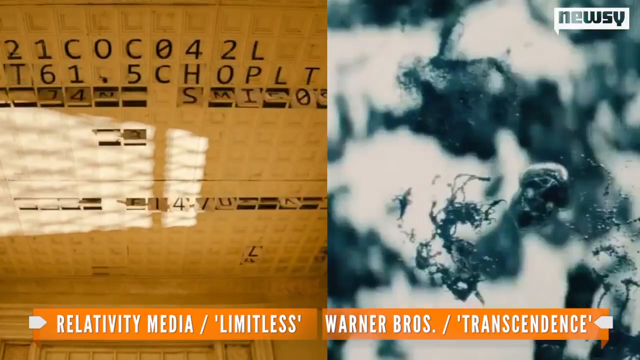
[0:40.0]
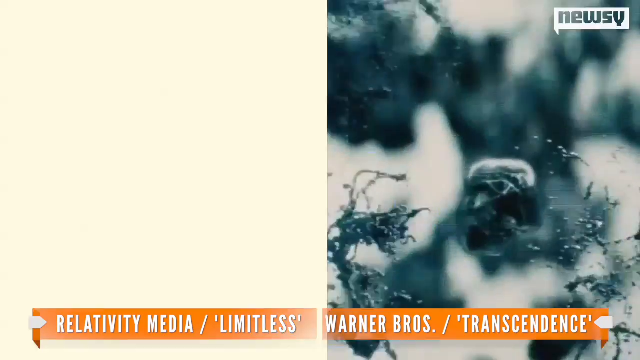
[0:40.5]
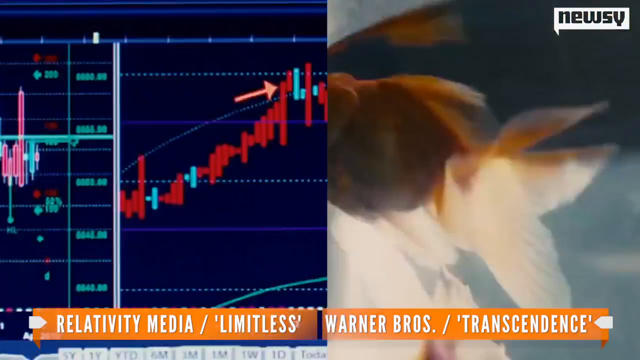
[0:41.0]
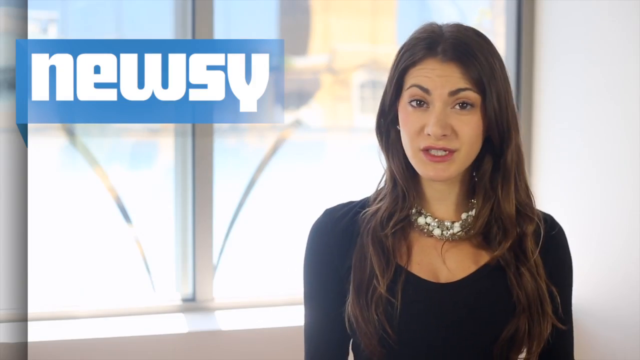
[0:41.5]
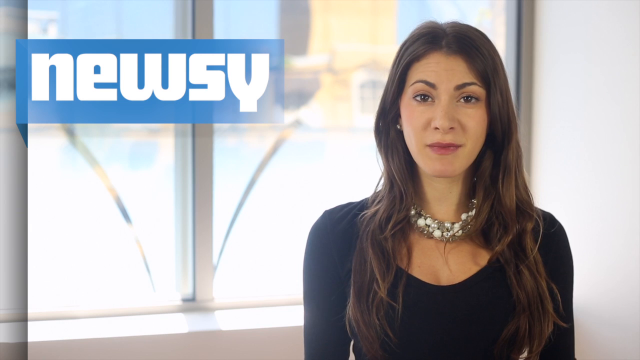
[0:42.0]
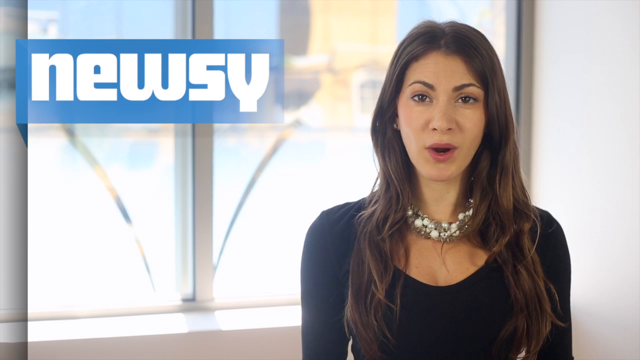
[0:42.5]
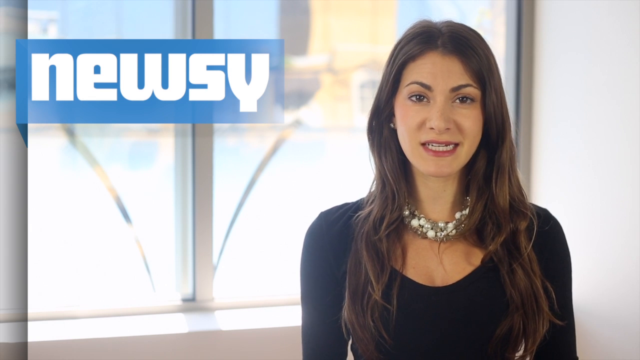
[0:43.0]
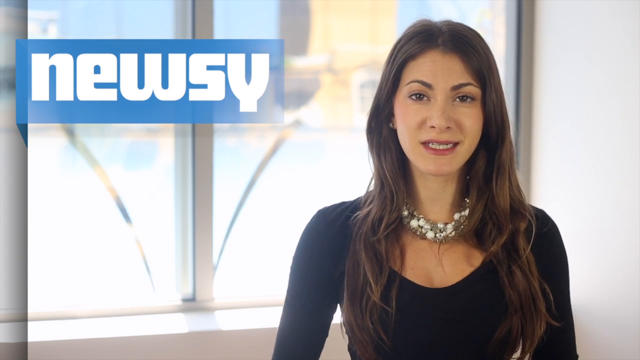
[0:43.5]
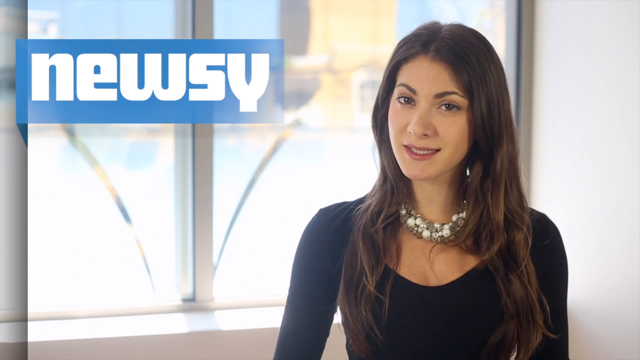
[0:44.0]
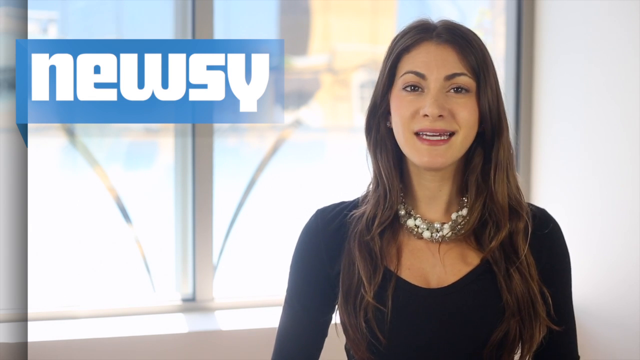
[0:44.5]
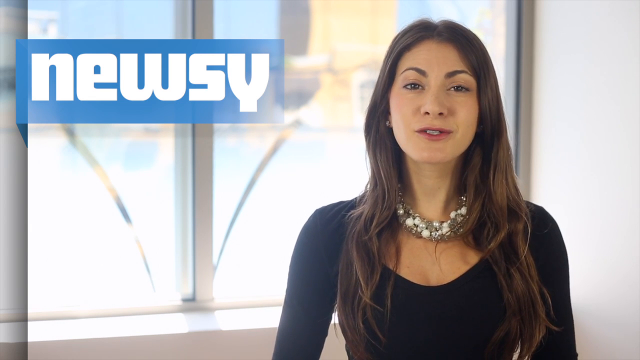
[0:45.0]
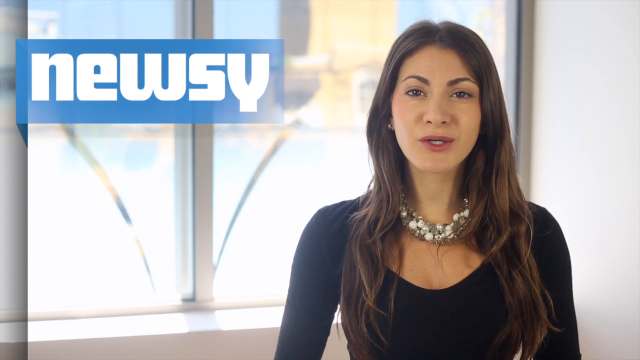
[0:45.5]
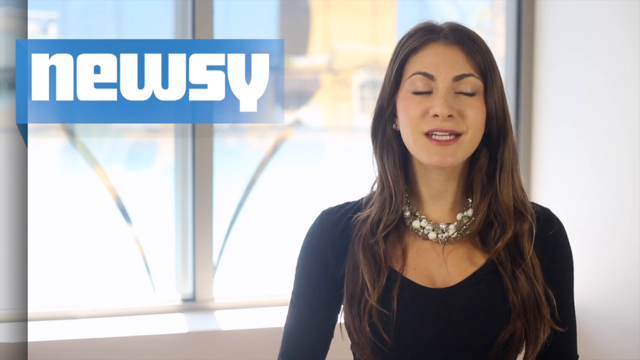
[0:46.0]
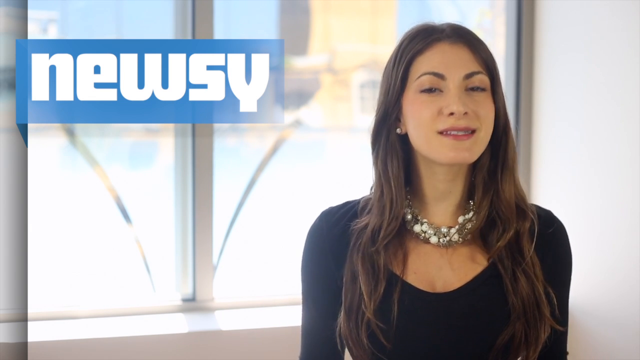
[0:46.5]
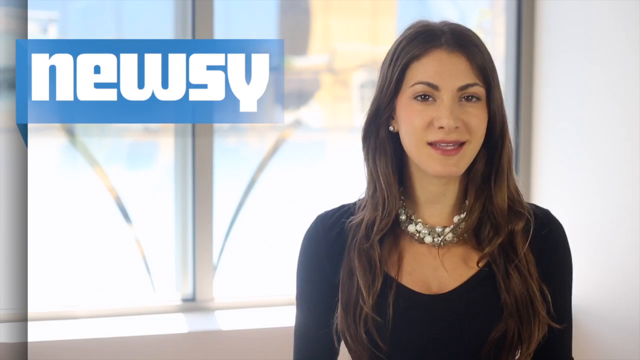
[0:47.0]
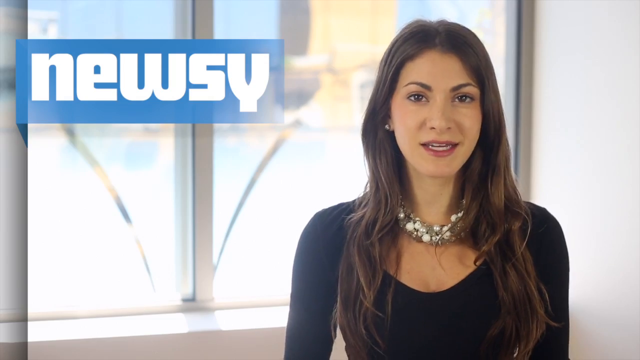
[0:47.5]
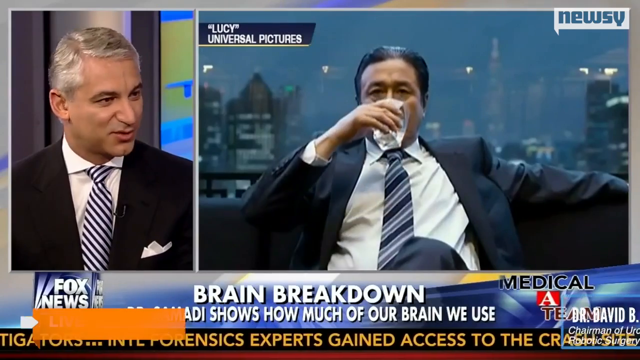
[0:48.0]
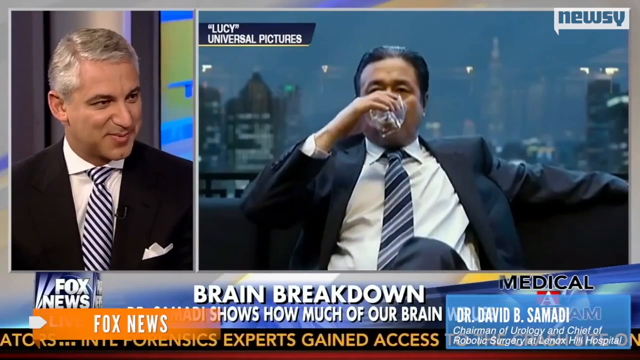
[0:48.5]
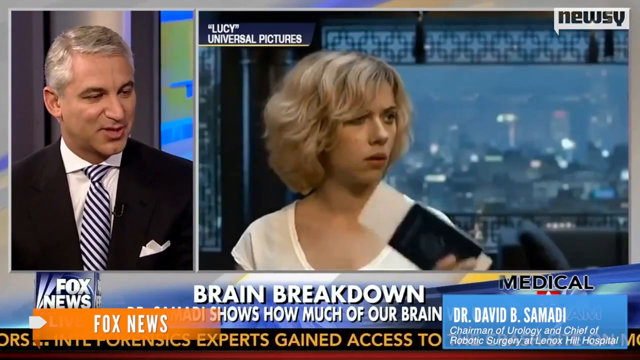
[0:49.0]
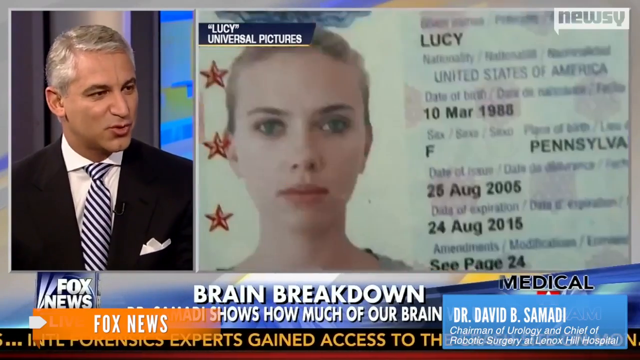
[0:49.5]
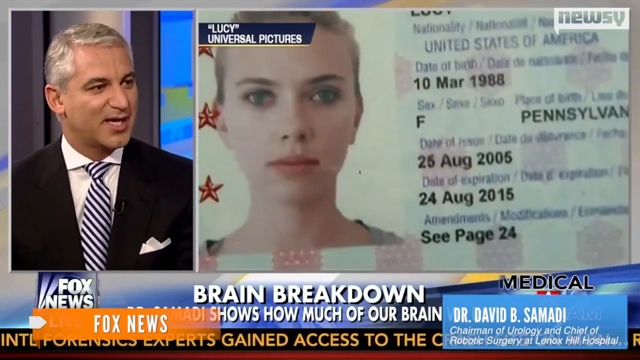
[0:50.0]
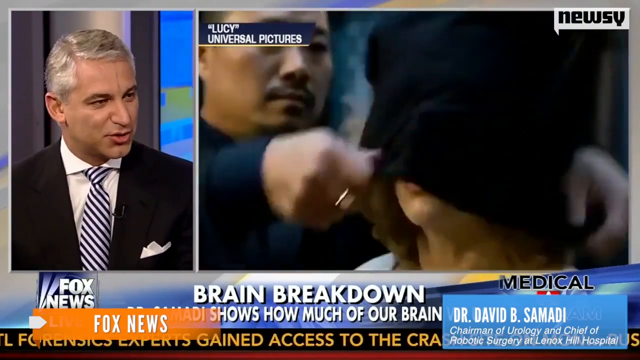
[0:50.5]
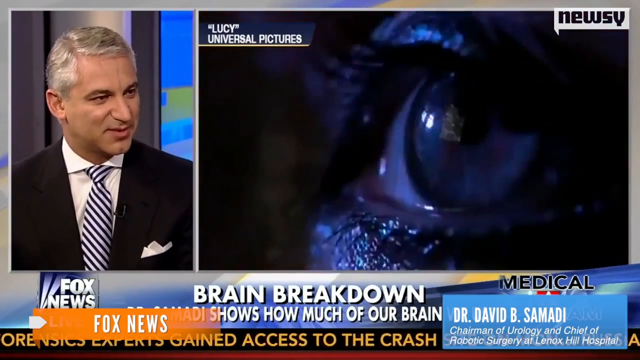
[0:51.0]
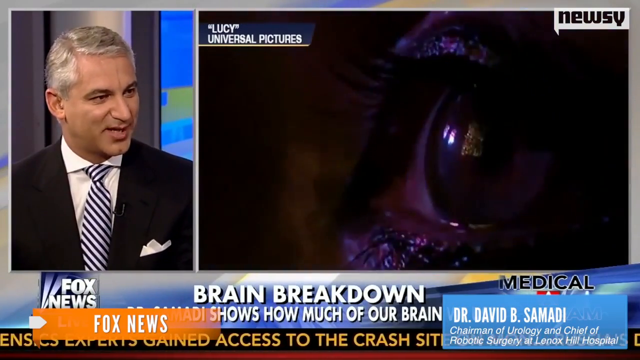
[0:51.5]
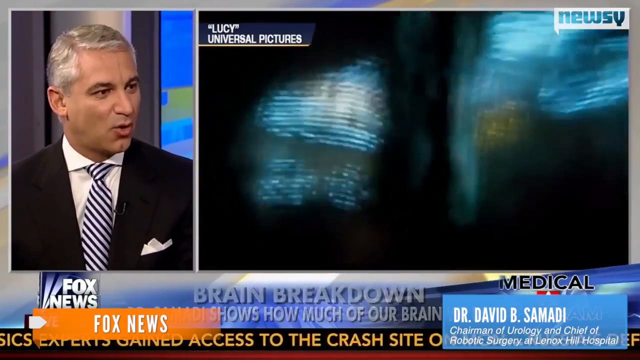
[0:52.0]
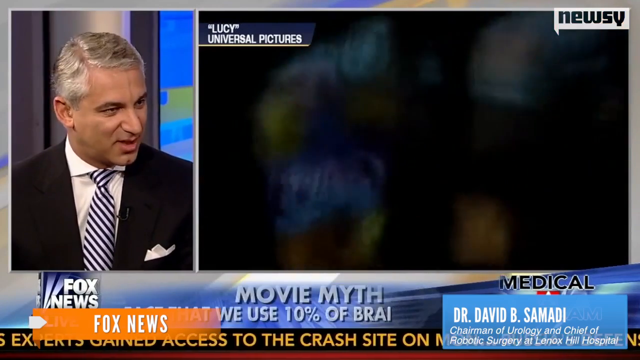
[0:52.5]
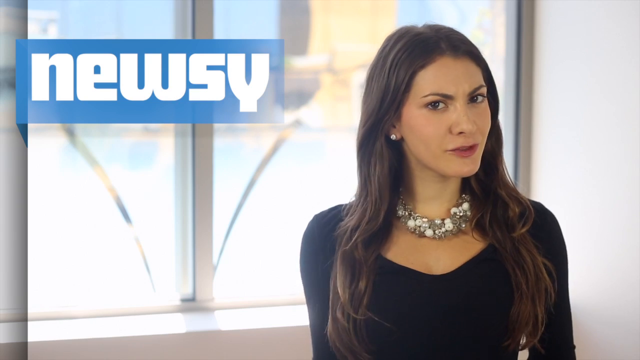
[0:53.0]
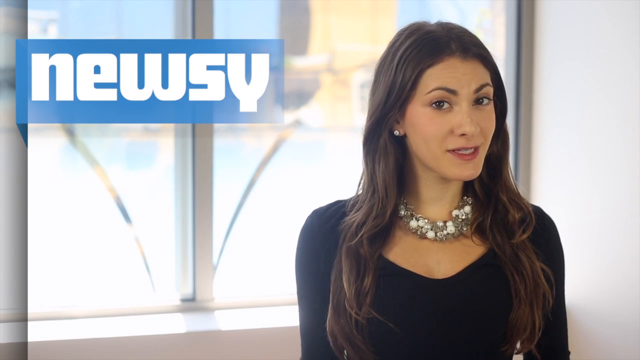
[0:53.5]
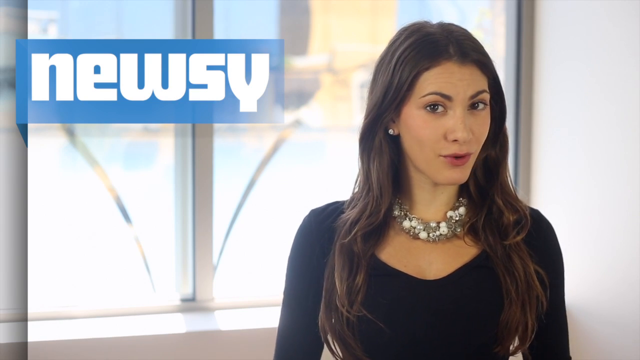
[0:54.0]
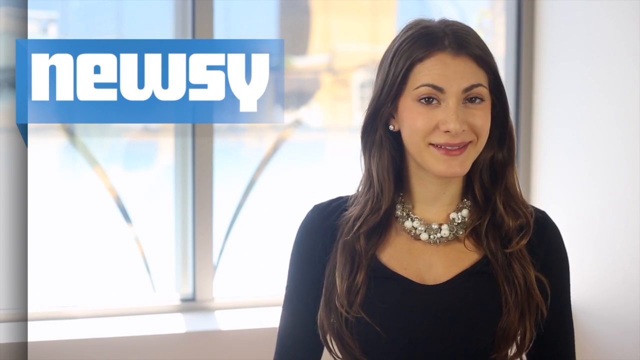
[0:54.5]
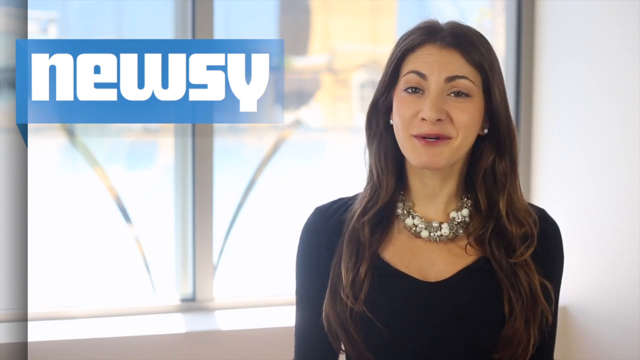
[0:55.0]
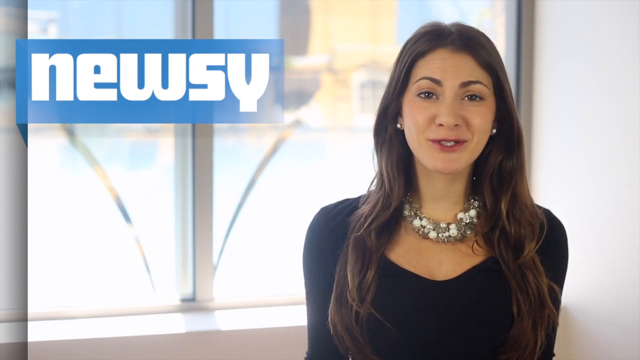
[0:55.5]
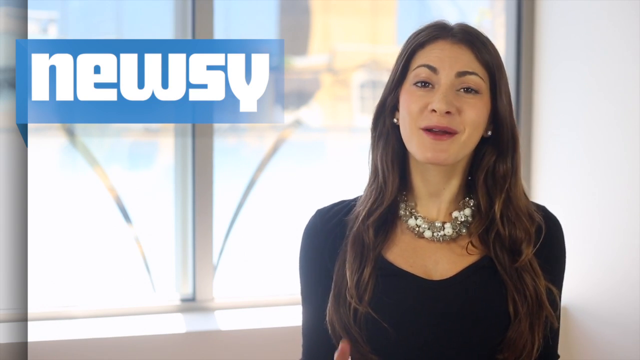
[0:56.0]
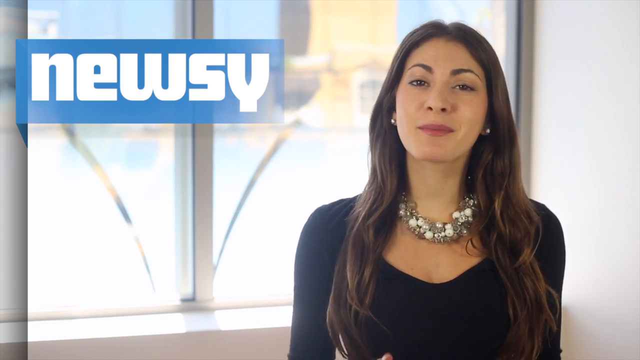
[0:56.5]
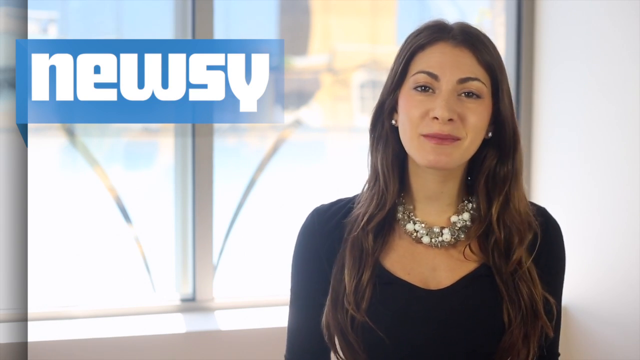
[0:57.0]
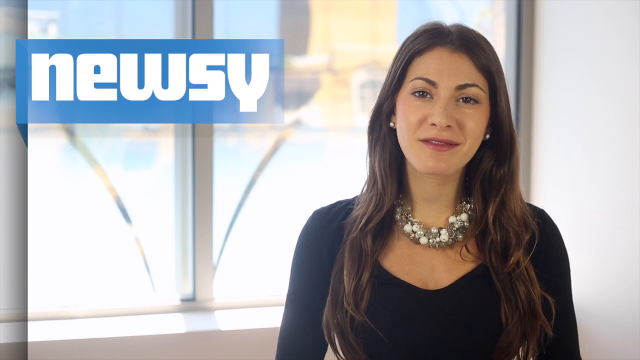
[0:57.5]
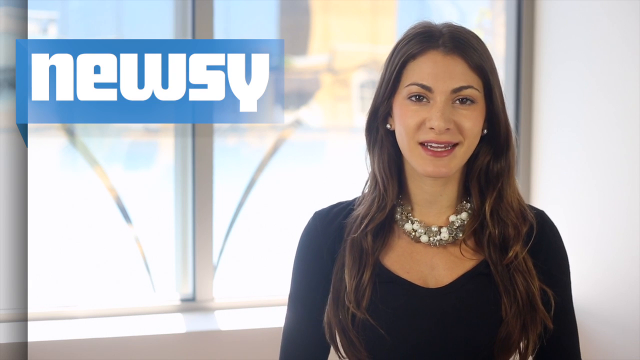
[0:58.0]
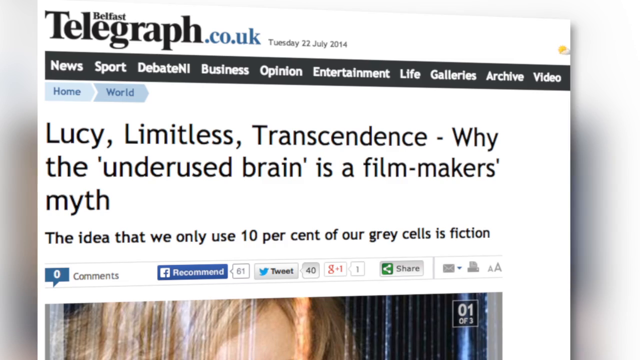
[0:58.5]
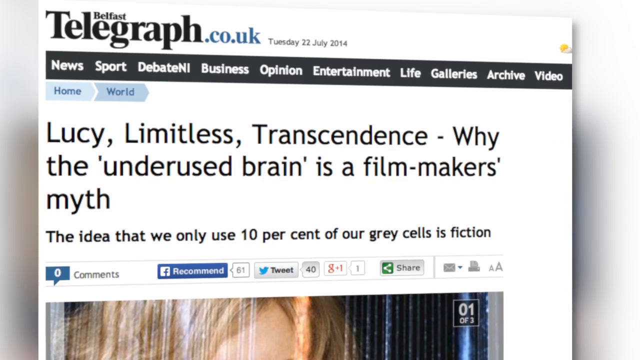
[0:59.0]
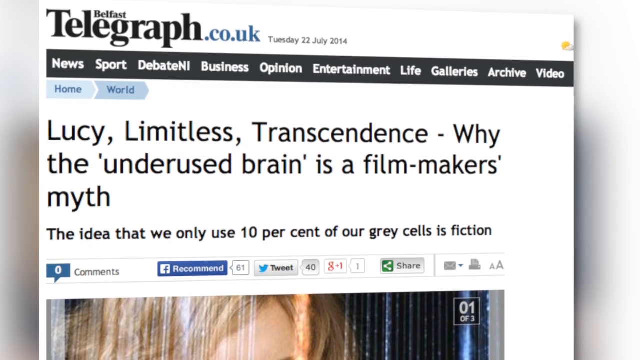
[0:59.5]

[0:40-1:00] An image shows what looks like a ceiling or wall on the right and, on the left side of the screen, something that looks almost like a Lego game. A young woman being interviewed then appears on the right side of the frame. She has dark brown hair parted in the center and wears a pearl stone necklace, and she speaks to the camera while looking slightly to the left. She looks quite thin and attractive. In the upper left corner is the Newsy logo: "Newsy" in white, bold block text on a blue banner. A window behind her clearly shows that it is daylight. The video then goes to a Fox News clip, with the Fox News logo in the lower left corner. On the right side of the screen is an actress, and text in quotation marks reads "Lucy, Universal Pictures."